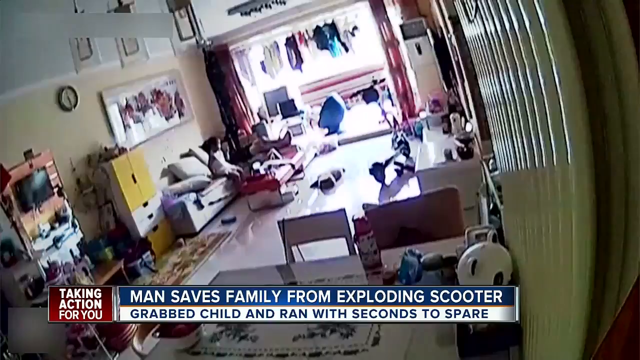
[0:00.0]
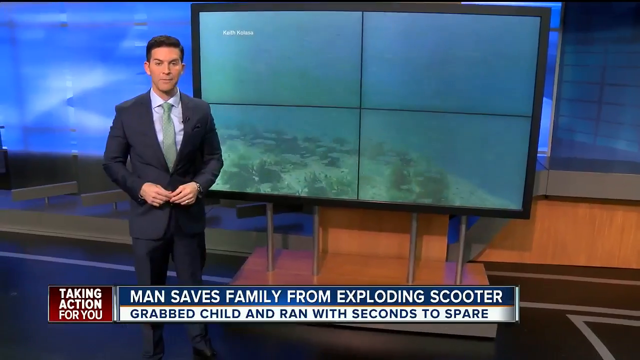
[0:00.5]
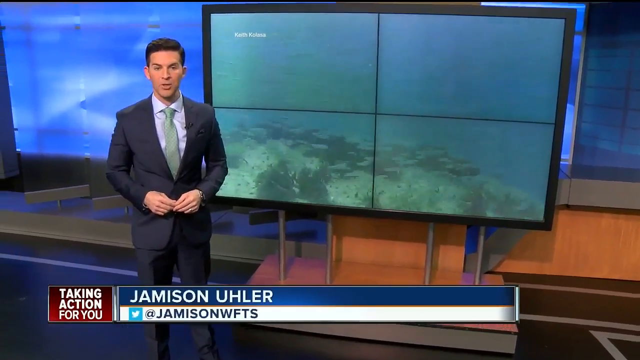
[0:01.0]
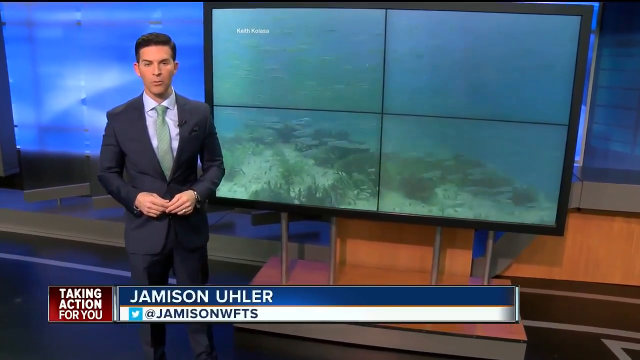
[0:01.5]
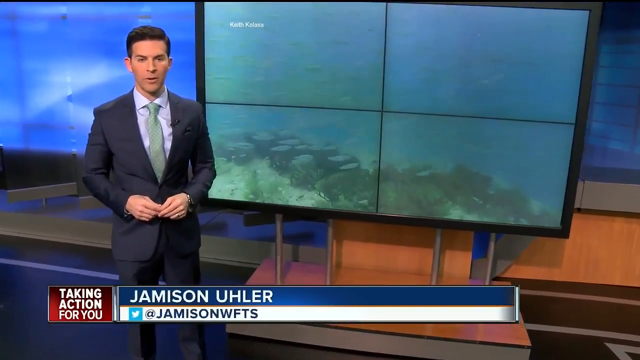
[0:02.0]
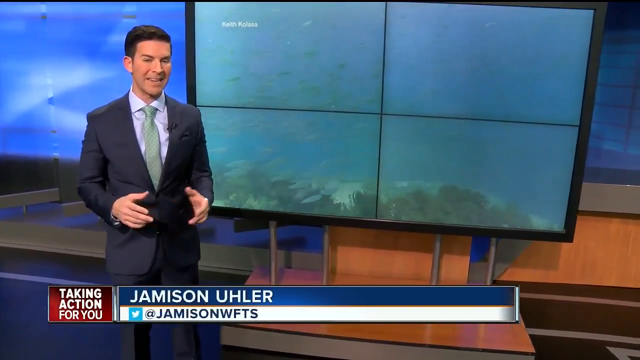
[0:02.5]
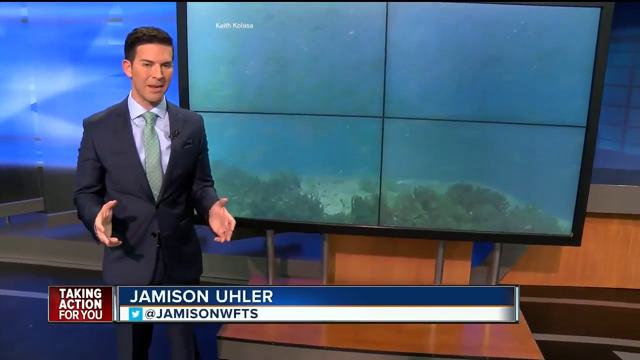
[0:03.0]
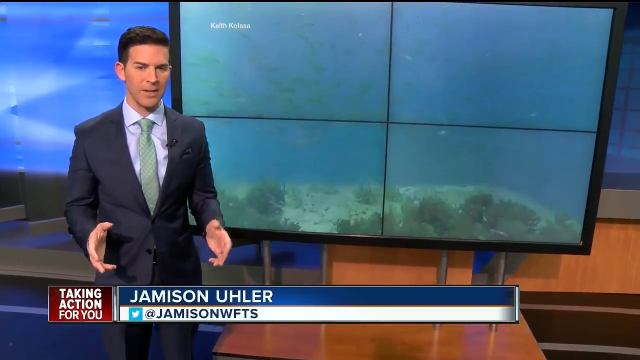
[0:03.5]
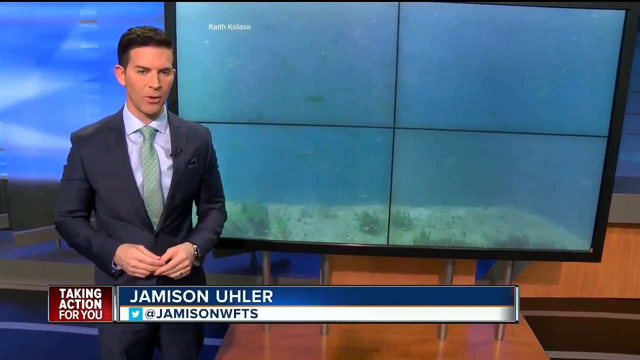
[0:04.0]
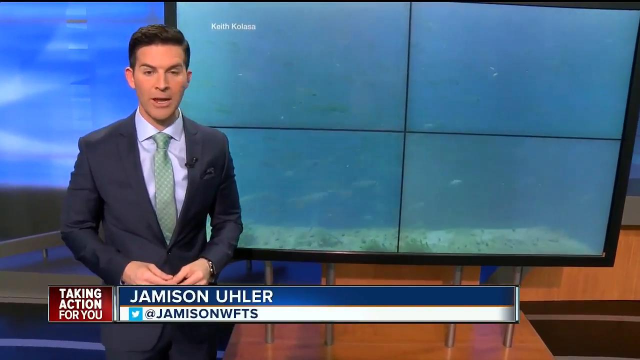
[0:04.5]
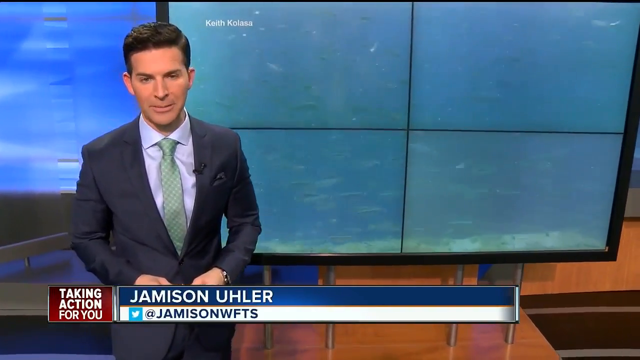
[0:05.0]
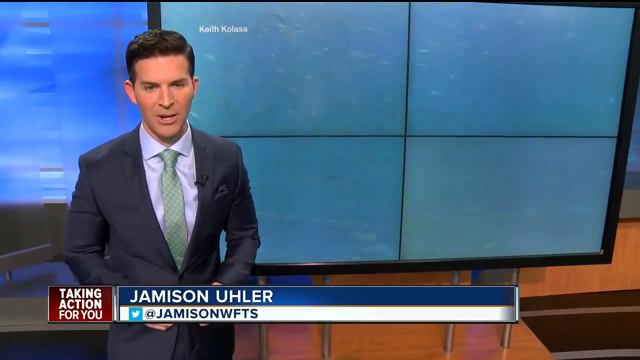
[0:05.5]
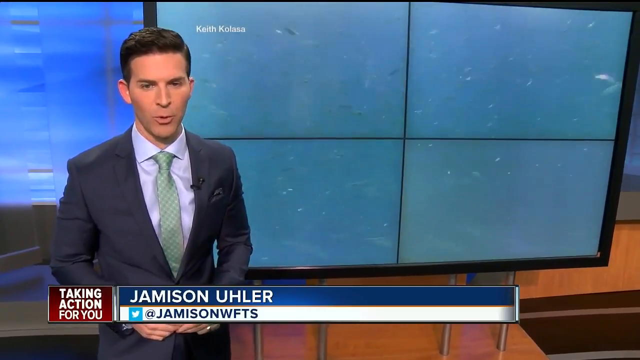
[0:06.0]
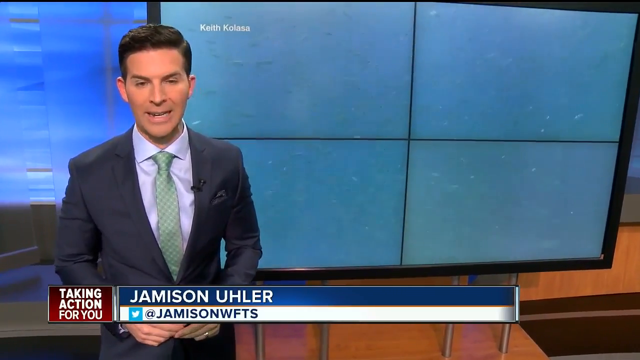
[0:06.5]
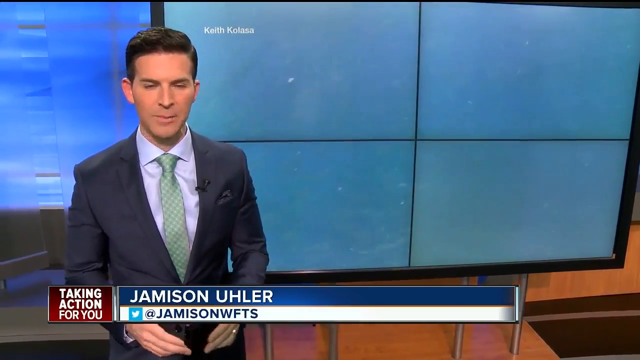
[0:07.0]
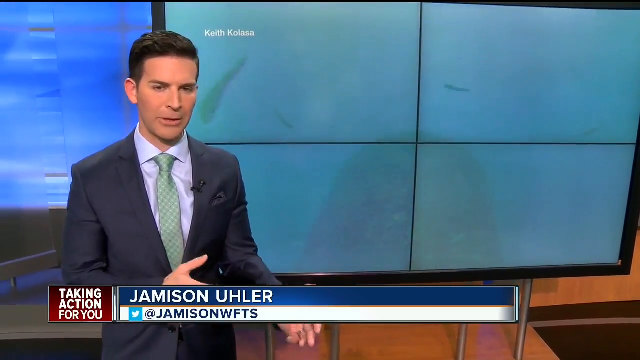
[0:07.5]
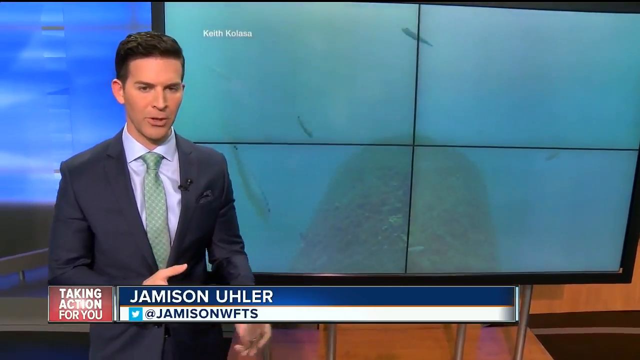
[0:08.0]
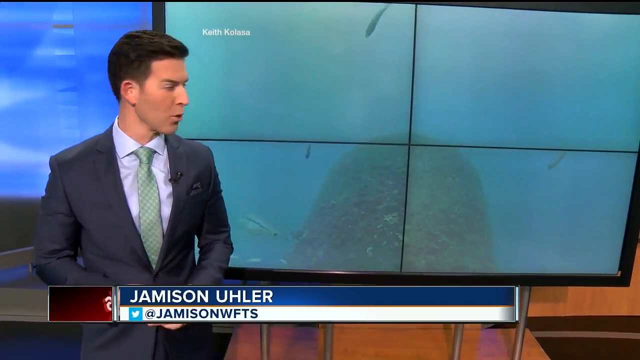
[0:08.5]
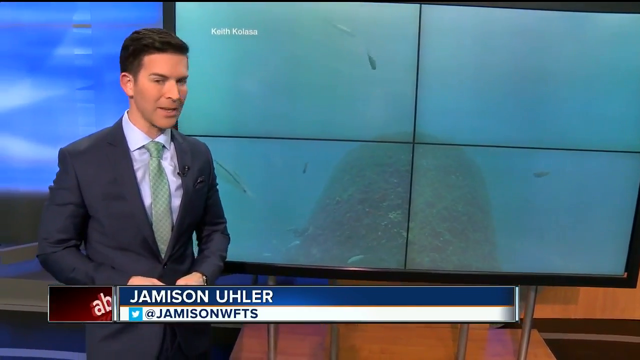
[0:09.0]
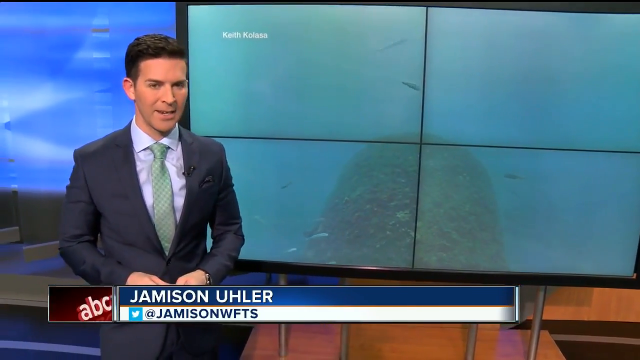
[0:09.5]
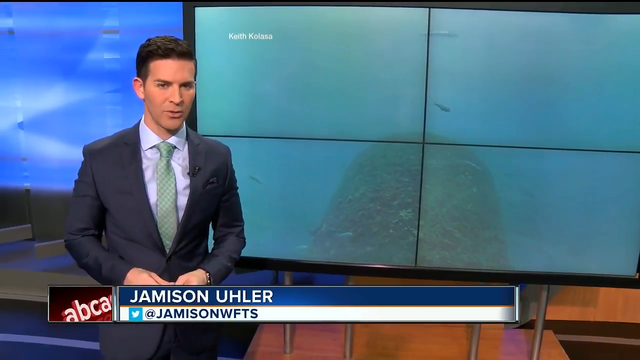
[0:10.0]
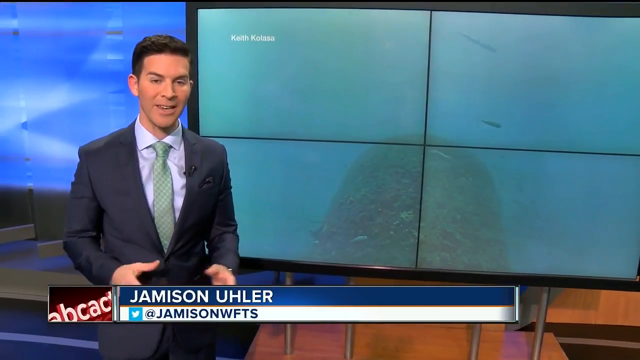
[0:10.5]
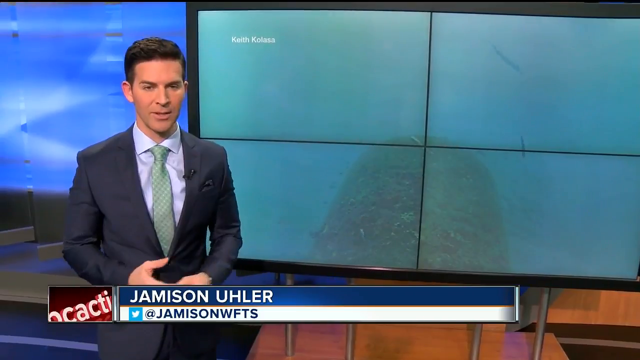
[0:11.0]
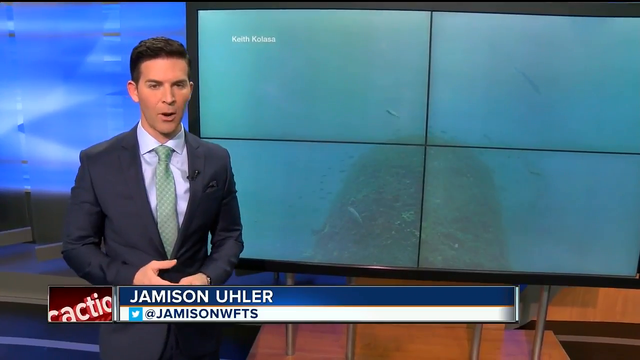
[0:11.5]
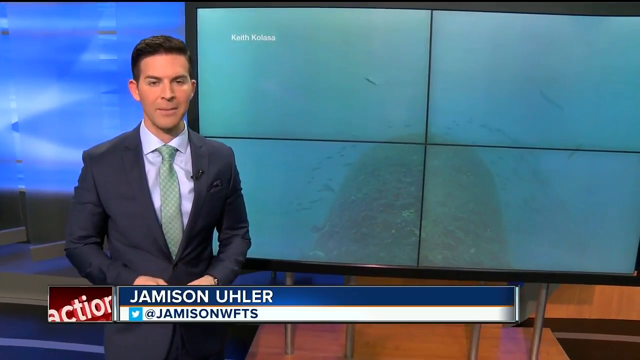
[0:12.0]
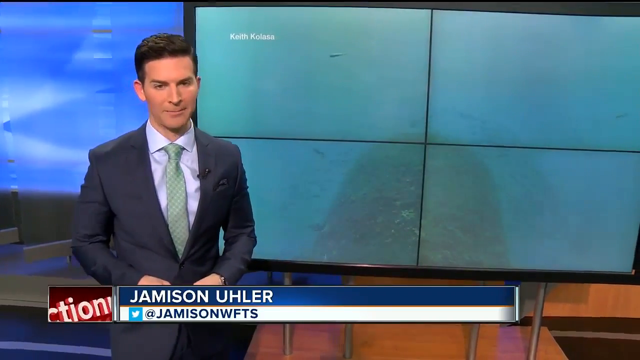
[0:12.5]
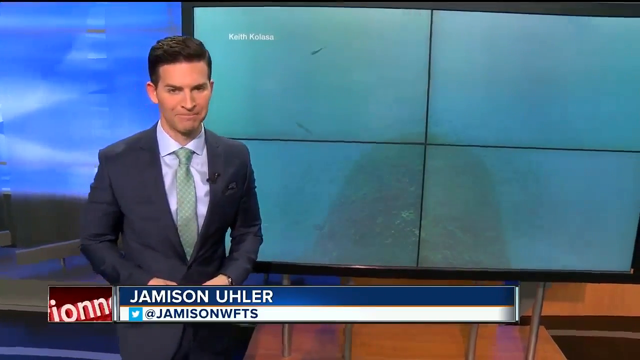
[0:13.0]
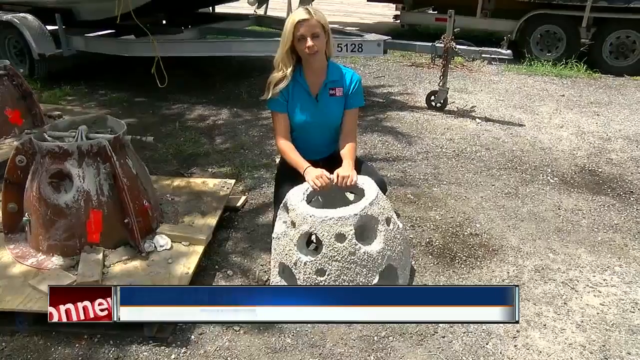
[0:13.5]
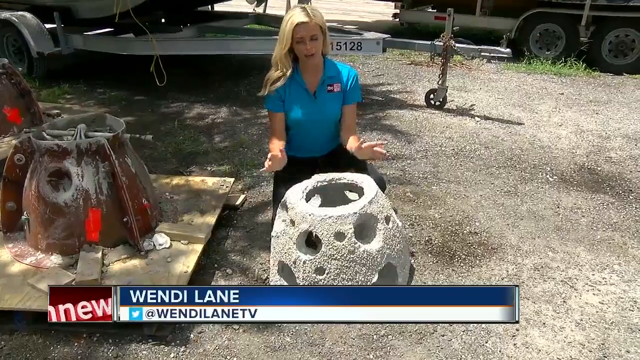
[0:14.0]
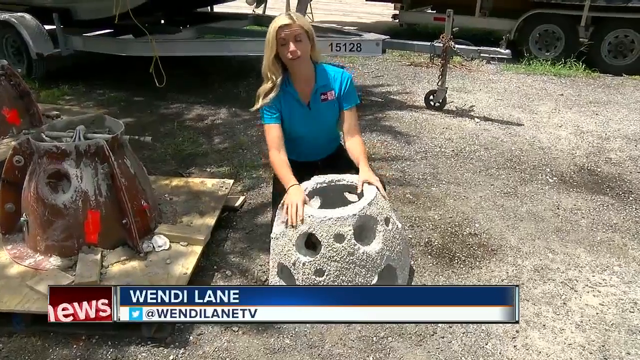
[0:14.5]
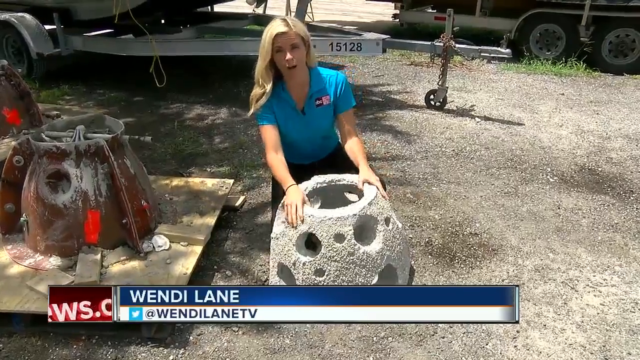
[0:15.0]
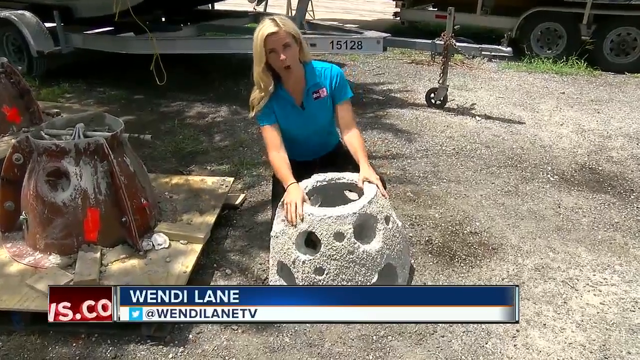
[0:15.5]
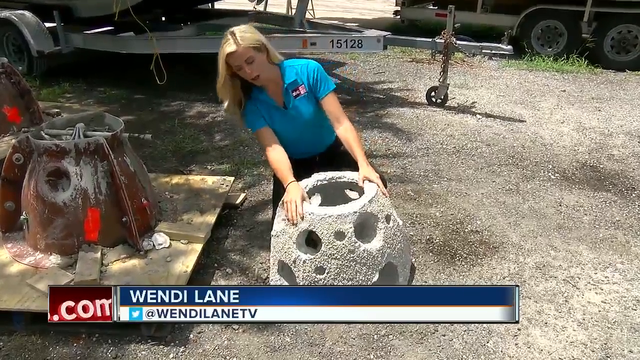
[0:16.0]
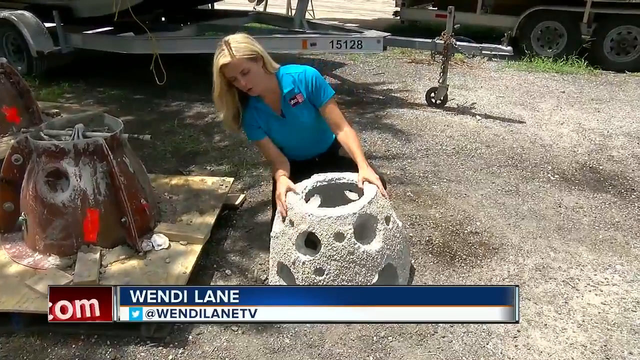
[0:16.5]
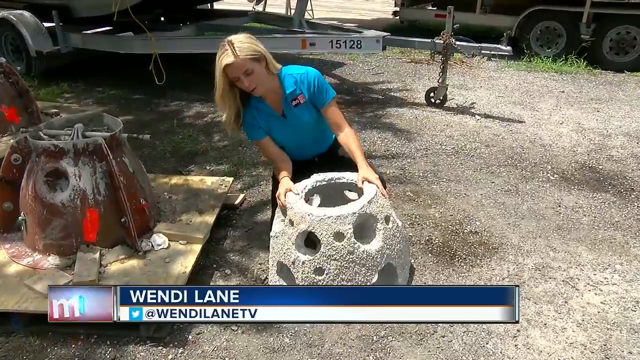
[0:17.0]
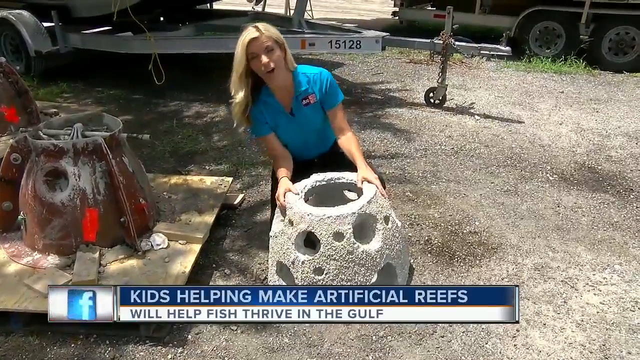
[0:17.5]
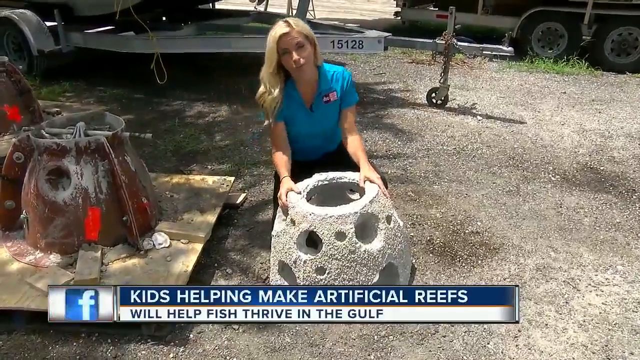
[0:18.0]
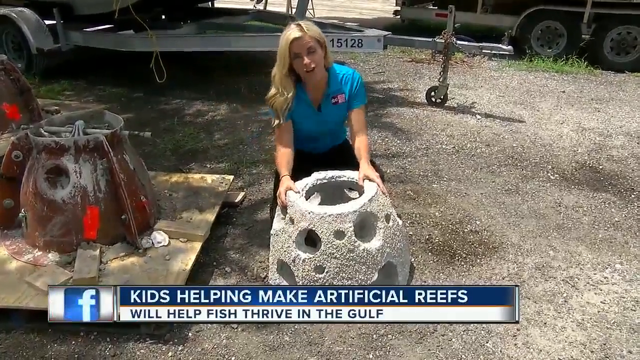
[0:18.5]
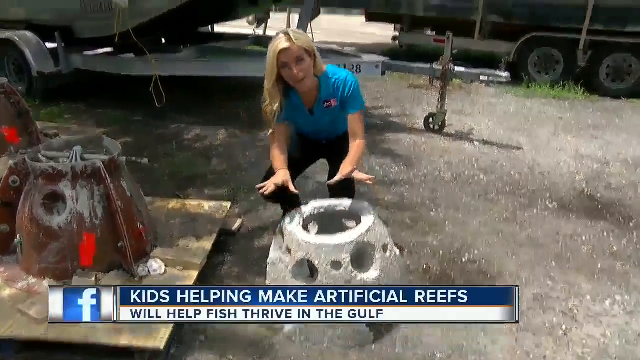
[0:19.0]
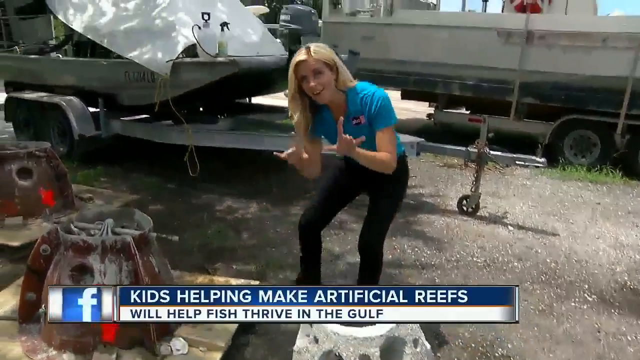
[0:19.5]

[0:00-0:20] The video opens on what appears to be a living room with a couch. Two people appear to be sitting on what looks like a white couch. Several pieces of clothing are on the ceiling, and several boxes are piled up on the far left. White text on the bottom left reads "taking action for you." A subtitle at the bottom is divided into two halves: the top half has a blue background with white text reading "man saves family from exploding scooter," and the bottom half has a white background with blue text reading "grab child and ran with seconds to spare." The scene then transitions to a news anchor in front of what appears to be a large monitor split into four. He wears a sports coat, navy blue slacks, a light blue collared shirt, and a gray tie. He appears to be Caucasian and is standing in front of the monitor.